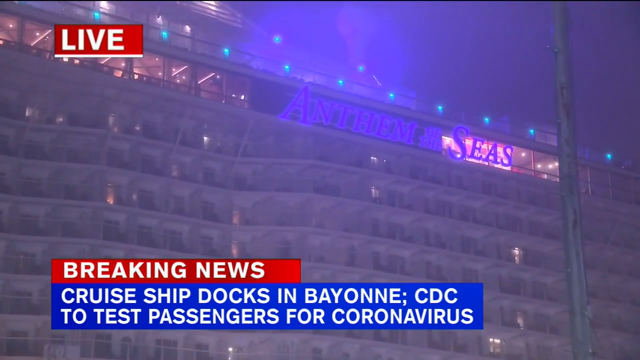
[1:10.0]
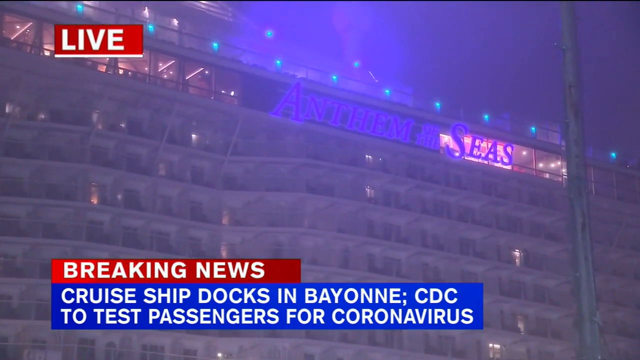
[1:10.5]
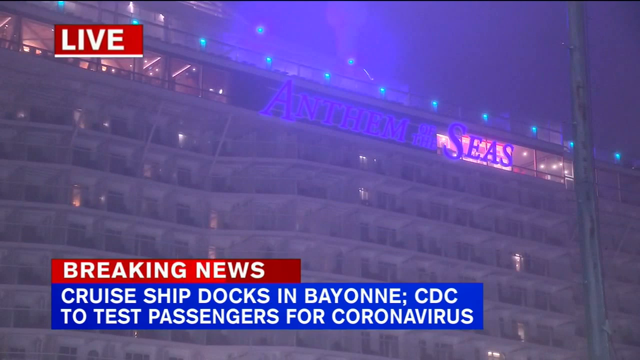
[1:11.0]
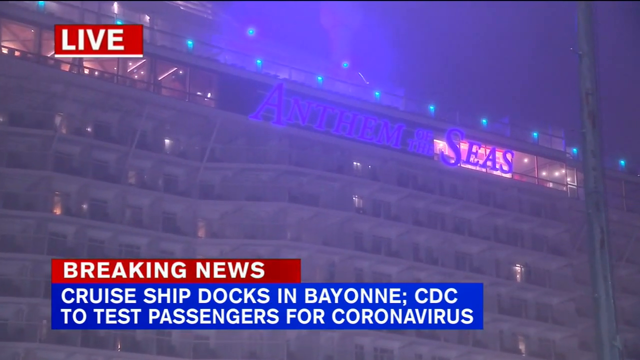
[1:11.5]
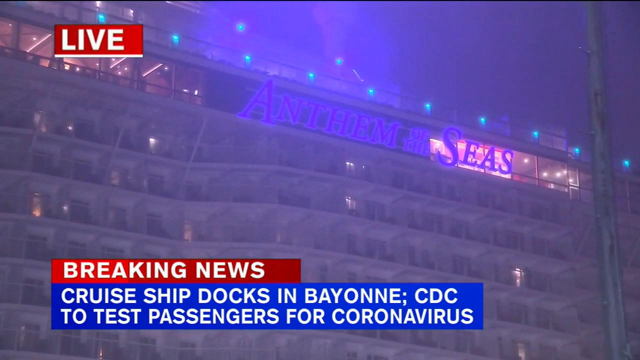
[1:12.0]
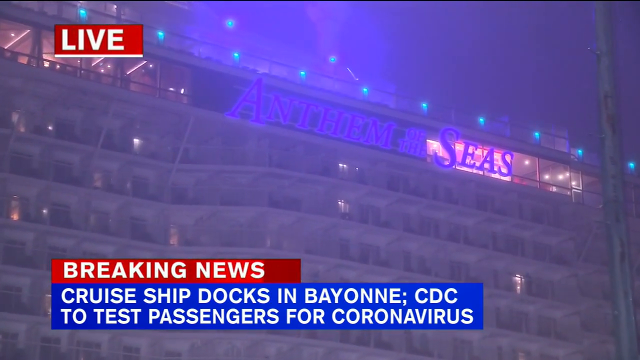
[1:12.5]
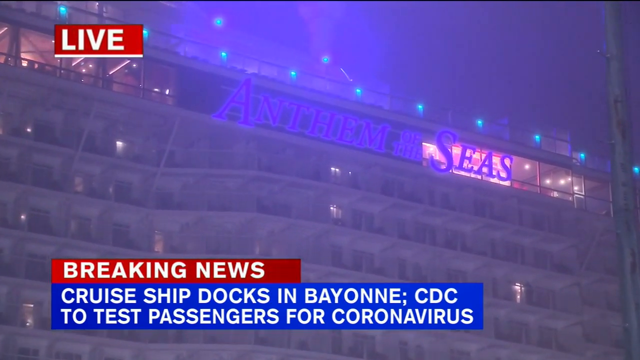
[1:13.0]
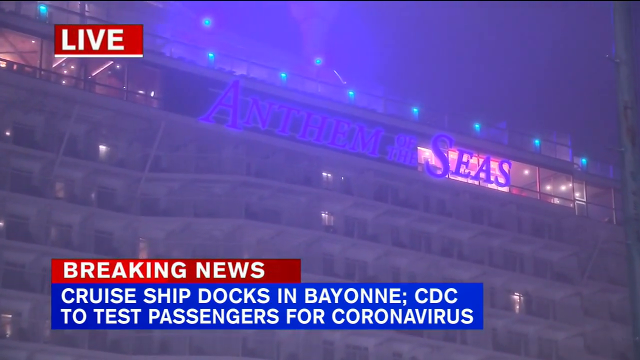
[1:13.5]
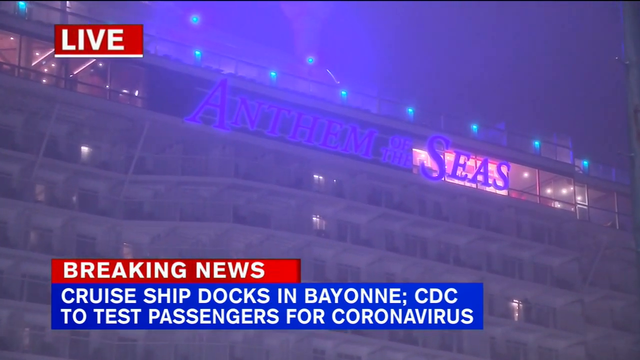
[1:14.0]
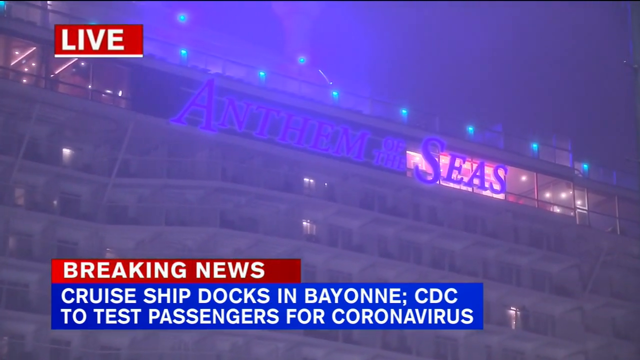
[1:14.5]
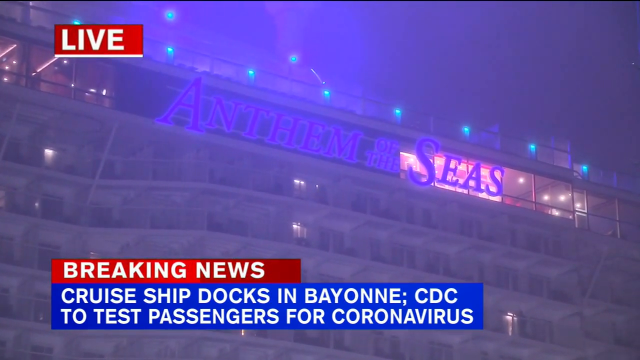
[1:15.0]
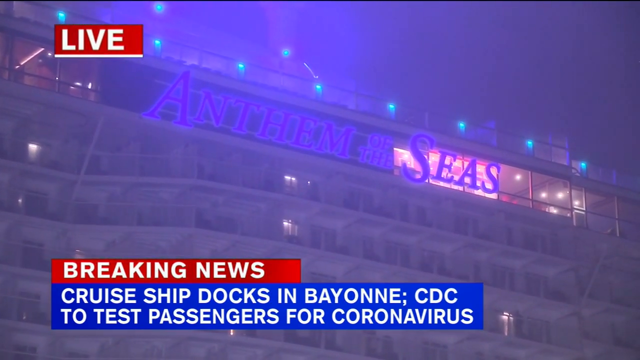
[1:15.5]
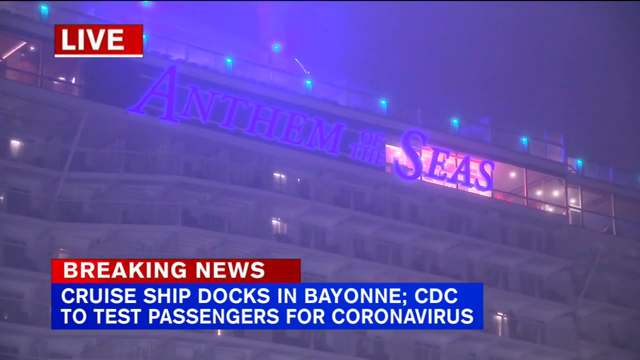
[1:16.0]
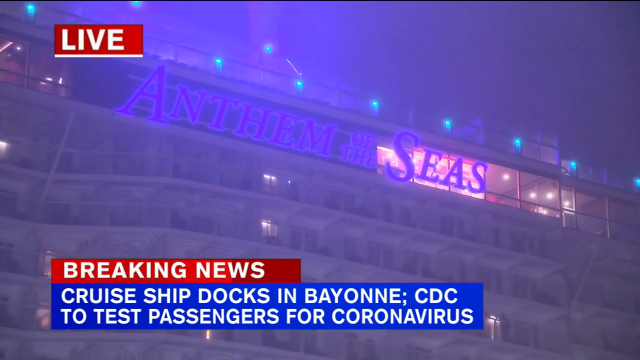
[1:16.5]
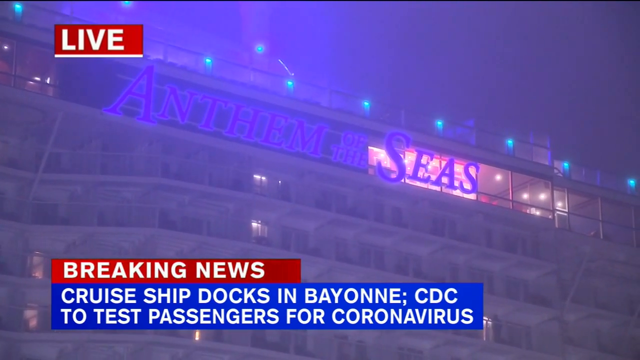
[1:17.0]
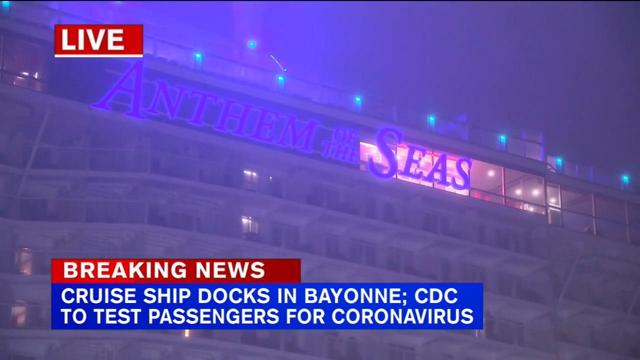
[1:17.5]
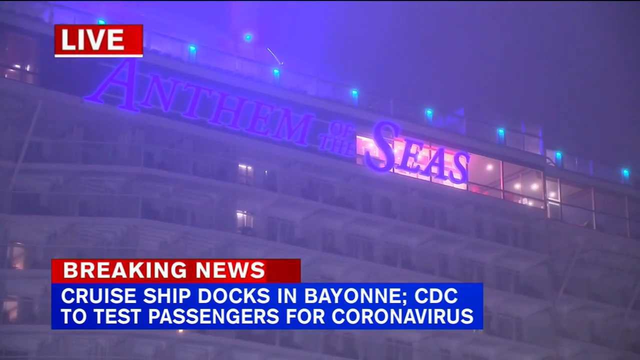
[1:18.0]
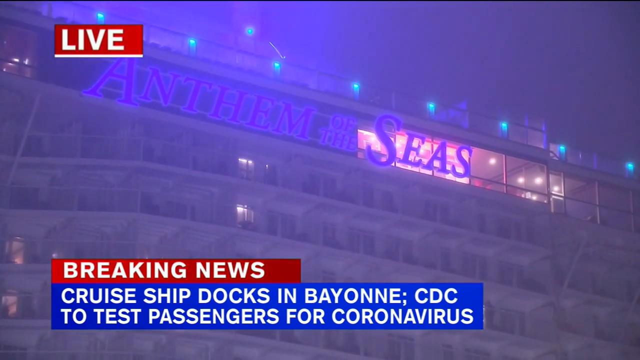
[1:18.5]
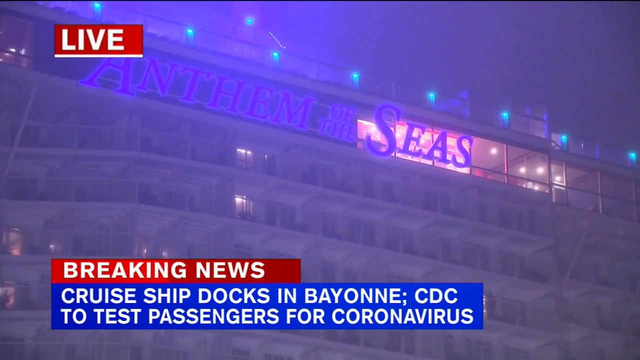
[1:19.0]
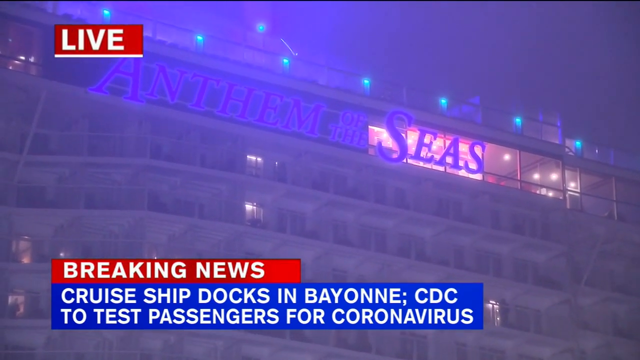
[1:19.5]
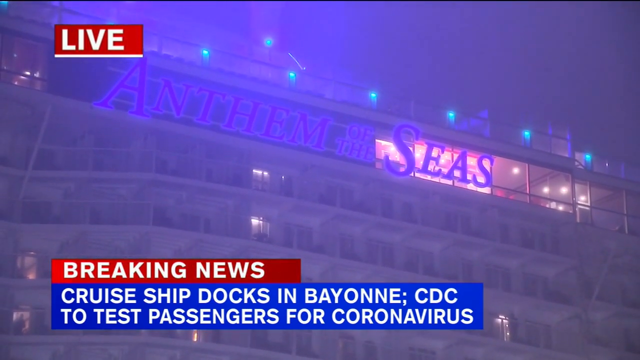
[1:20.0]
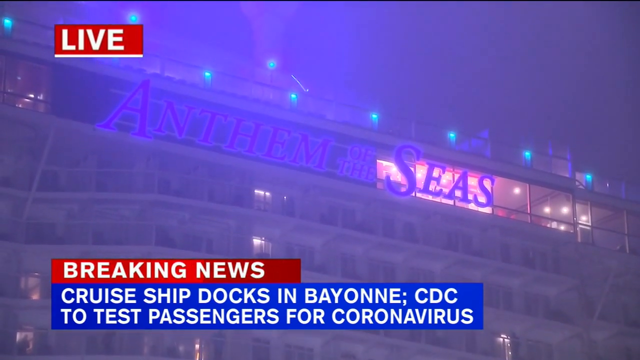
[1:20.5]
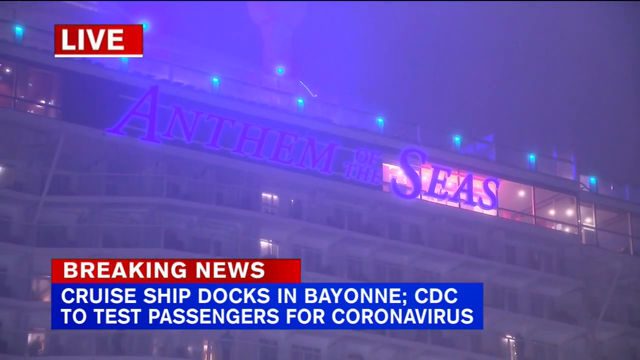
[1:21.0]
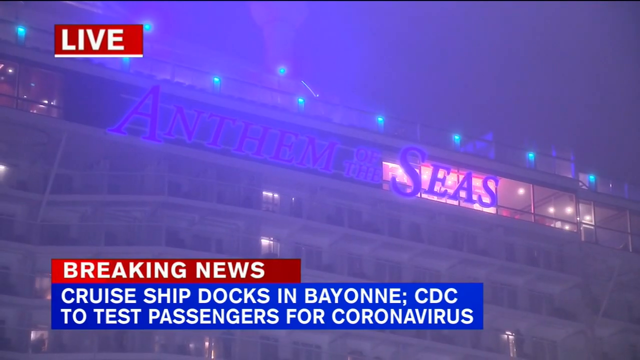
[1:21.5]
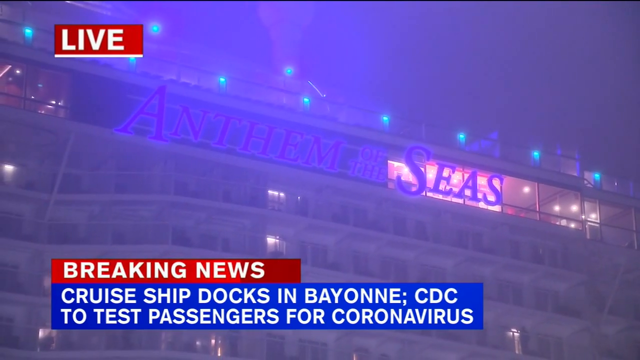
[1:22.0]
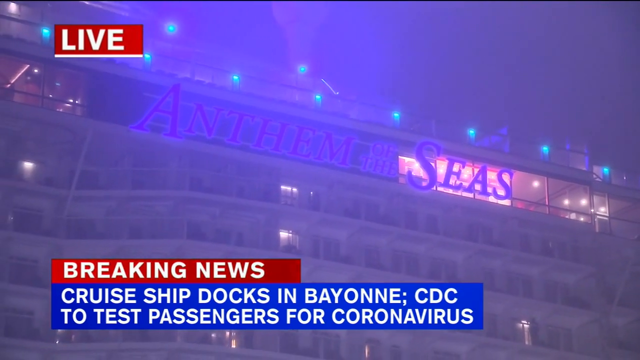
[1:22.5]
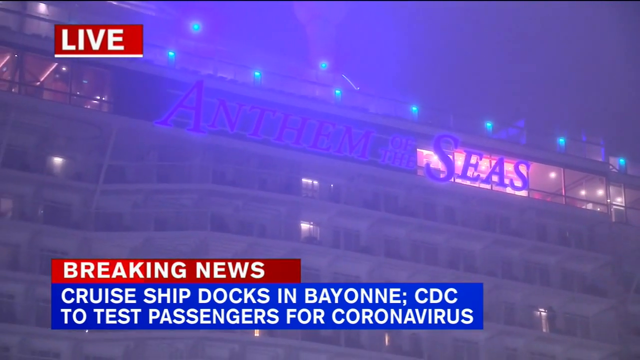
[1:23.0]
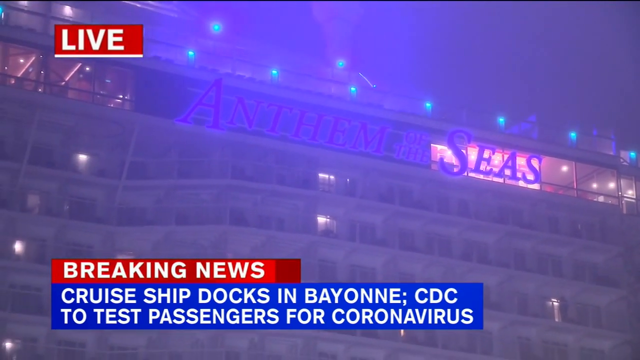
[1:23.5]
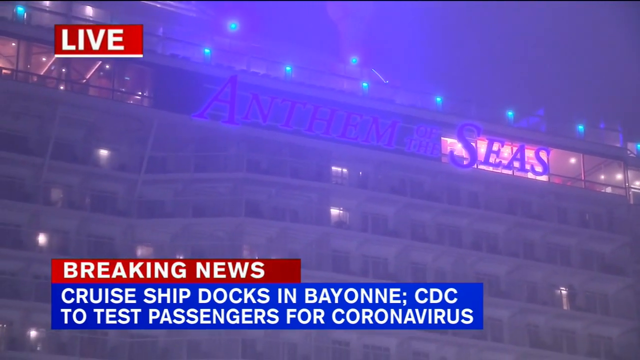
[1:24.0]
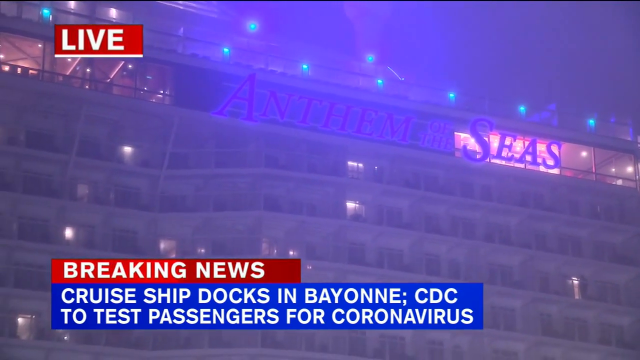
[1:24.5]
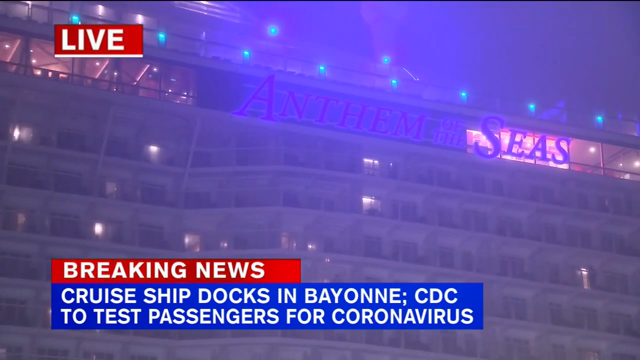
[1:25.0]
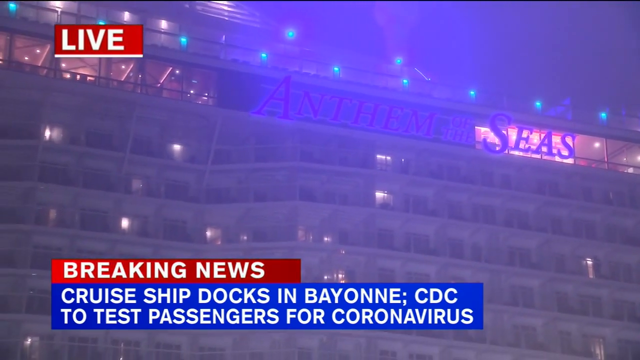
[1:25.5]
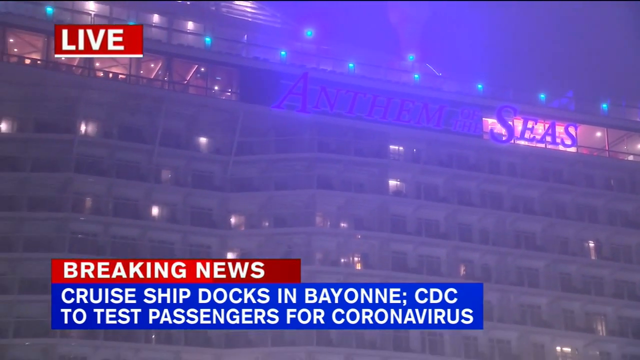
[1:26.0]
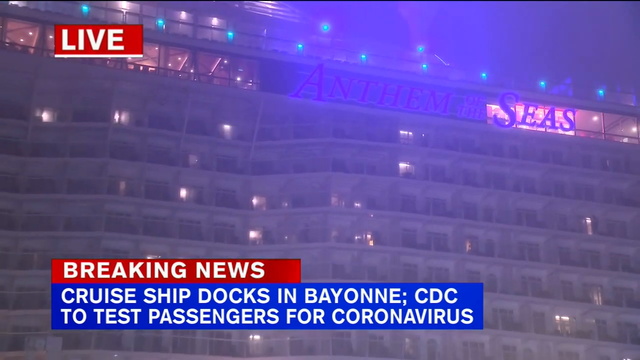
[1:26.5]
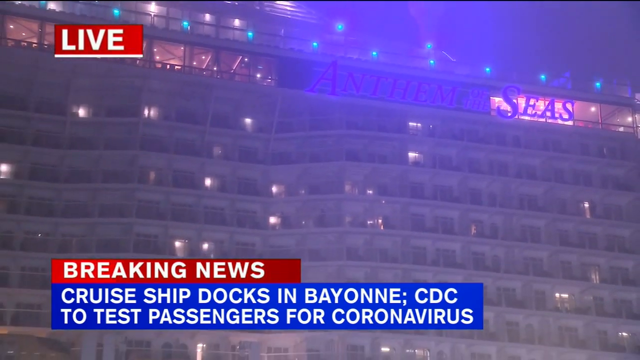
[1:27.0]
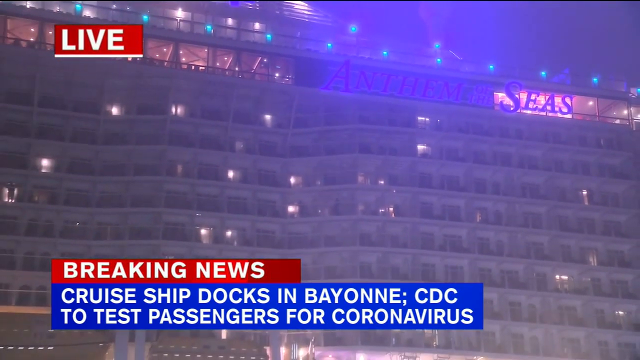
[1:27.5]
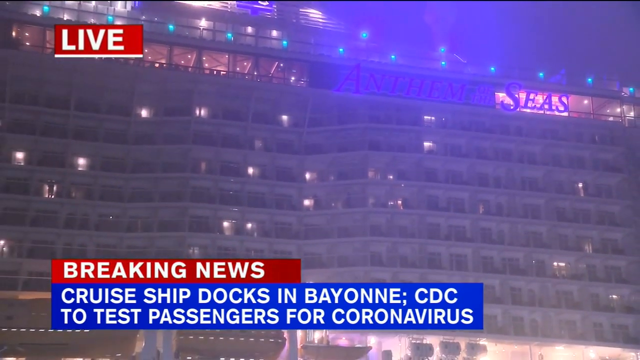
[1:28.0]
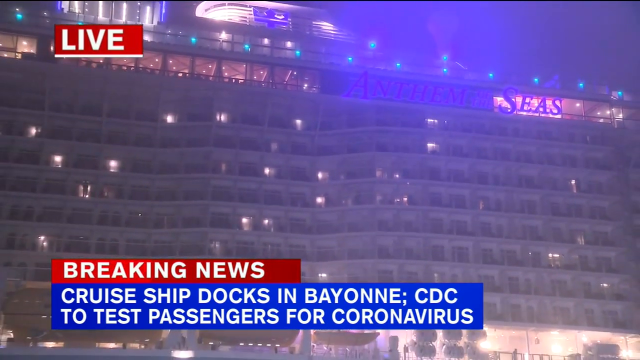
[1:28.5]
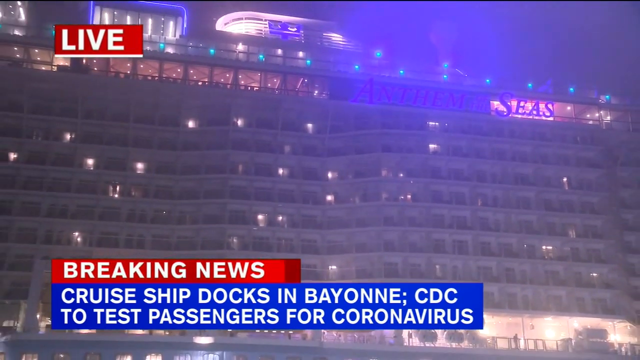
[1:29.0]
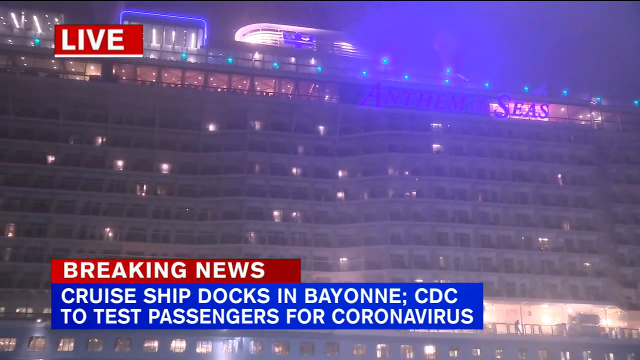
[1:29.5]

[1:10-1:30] A cruise ship has "Princess Diamond" on it. An on-screen message says "breaking news, eight Americans on Japanese cruise ship tested positive for coronavirus." A white ambulance appears with two men standing next to it who seem to be directing the ambulance; one man wears a blue suit. The shot shifts to a big white cruise ship with "Anthem of the Seas" and "Royal Caribbean" written on it. It seems to be night, or at least a very dark and foggy day. The ship is massive with countless lighted windows and multiple decks, and the name "Anthem of the Seas" is brightly lit in blue on each side. There are static views of the ship at the dock. A message on the screen says "cruise ship docks in Bayonne, CDC to test passengers for coronavirus." "Anthem of the Seas" appears in blue at the top of the huge cruise ship.